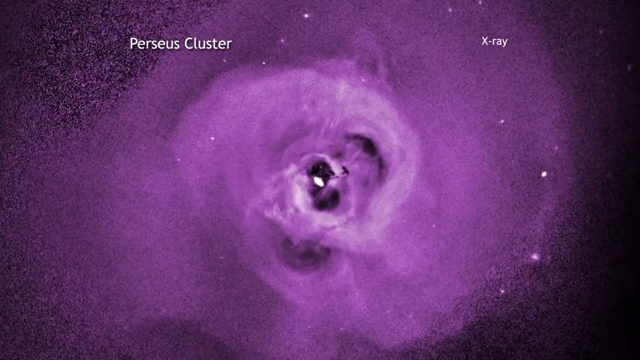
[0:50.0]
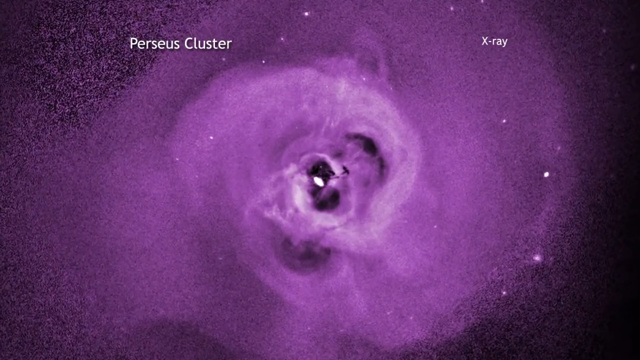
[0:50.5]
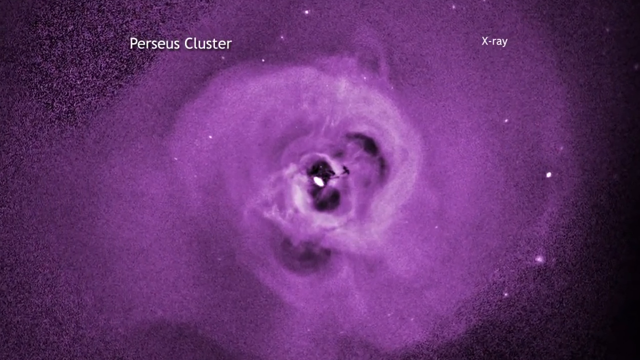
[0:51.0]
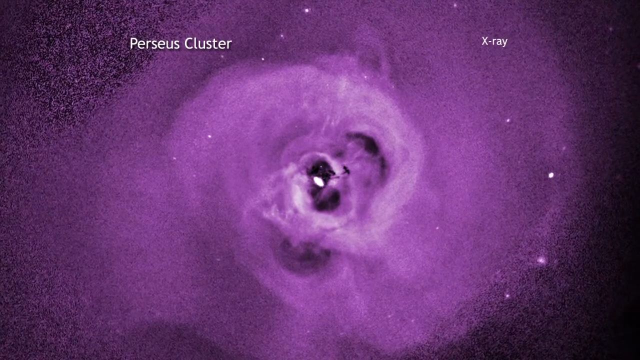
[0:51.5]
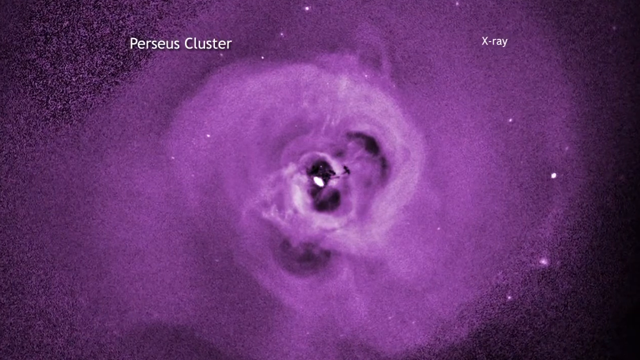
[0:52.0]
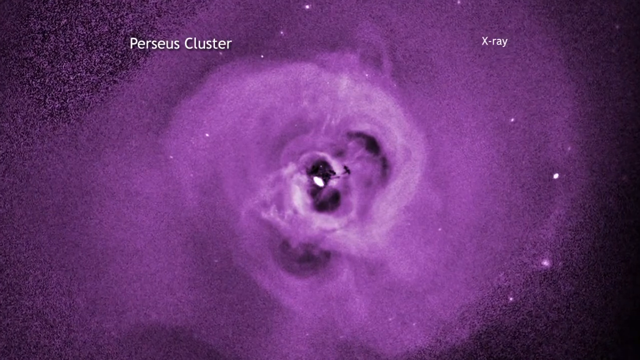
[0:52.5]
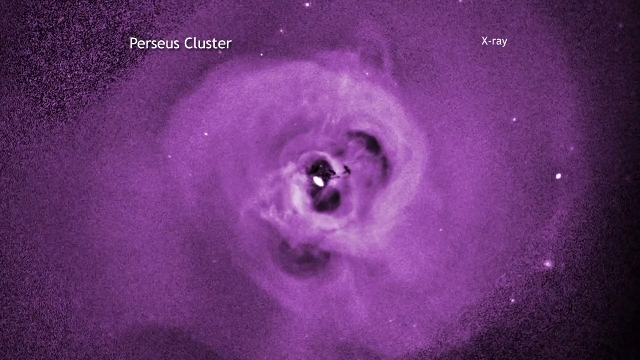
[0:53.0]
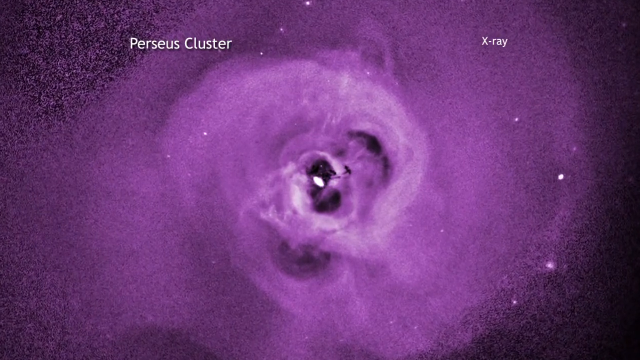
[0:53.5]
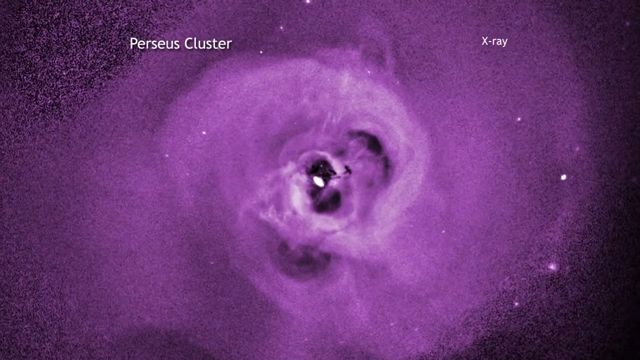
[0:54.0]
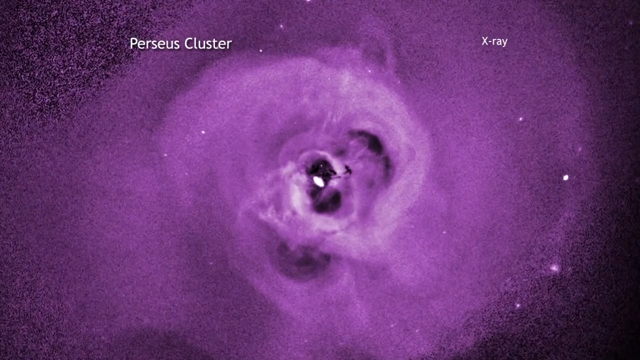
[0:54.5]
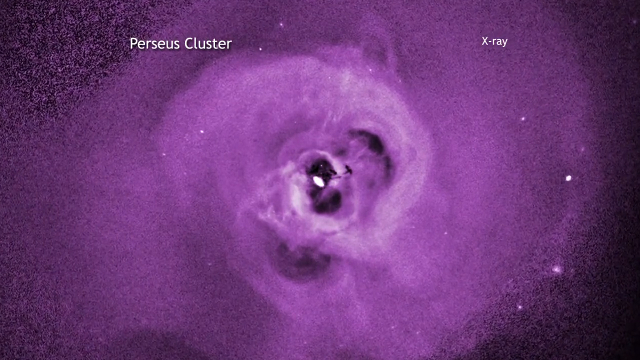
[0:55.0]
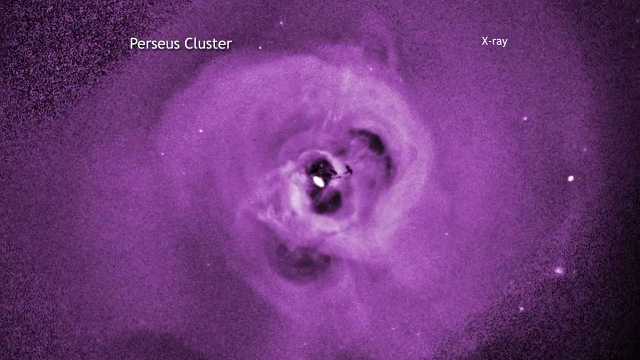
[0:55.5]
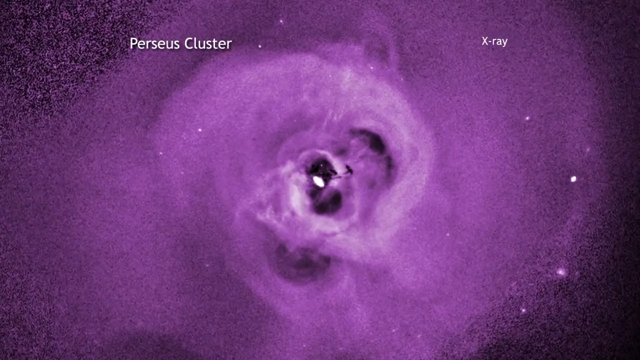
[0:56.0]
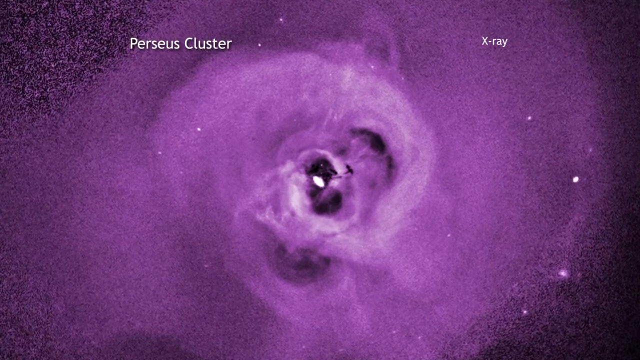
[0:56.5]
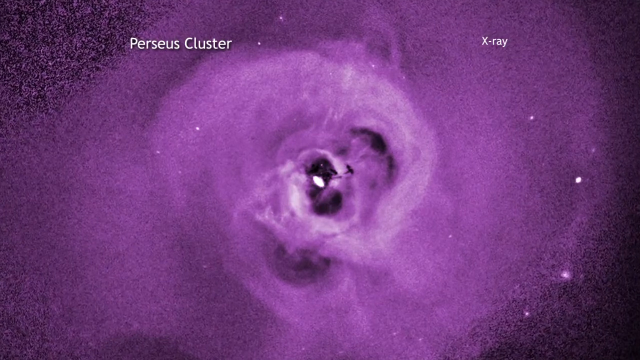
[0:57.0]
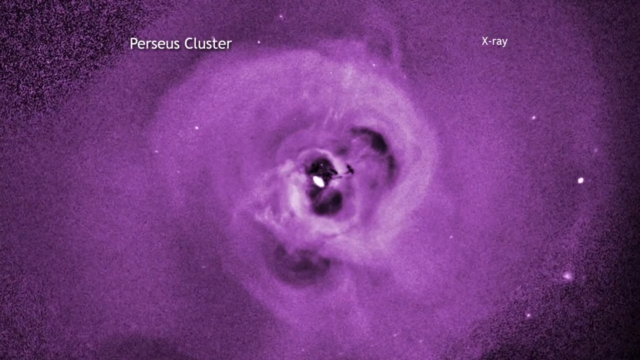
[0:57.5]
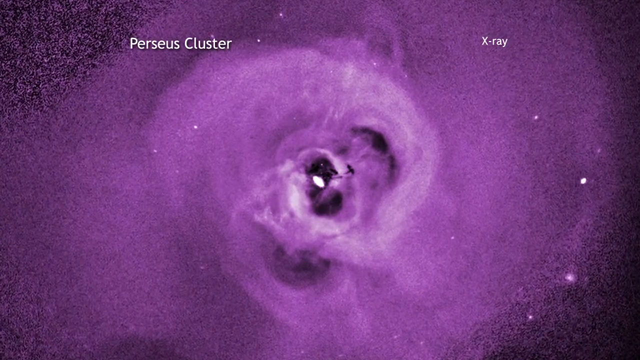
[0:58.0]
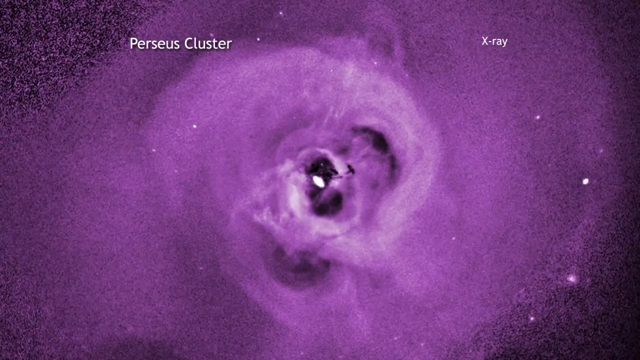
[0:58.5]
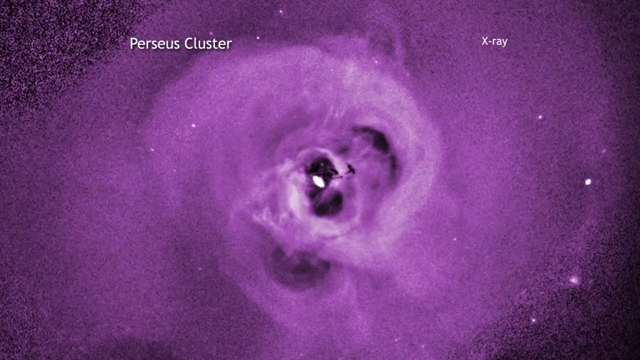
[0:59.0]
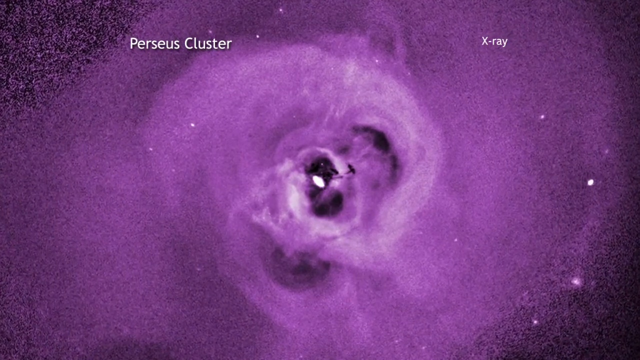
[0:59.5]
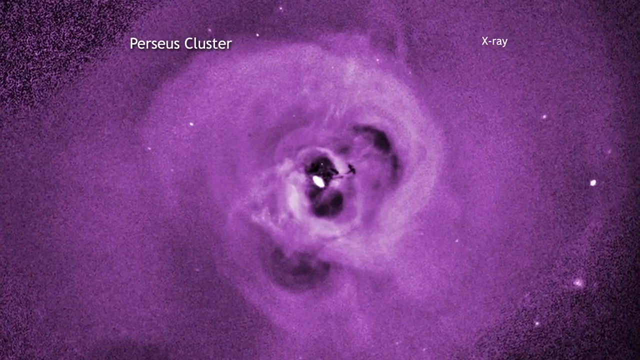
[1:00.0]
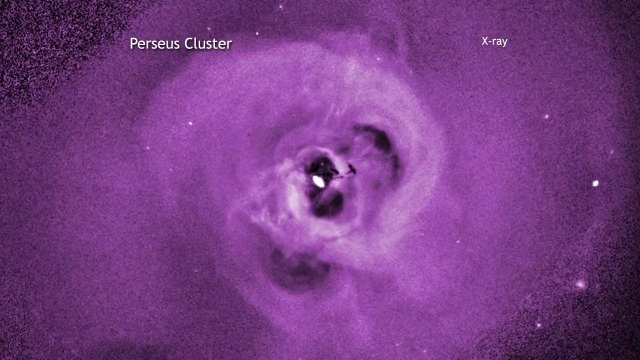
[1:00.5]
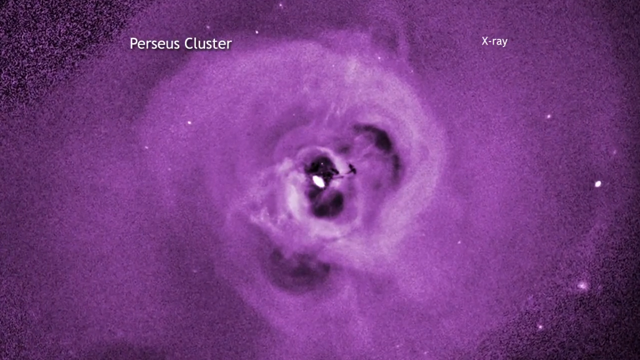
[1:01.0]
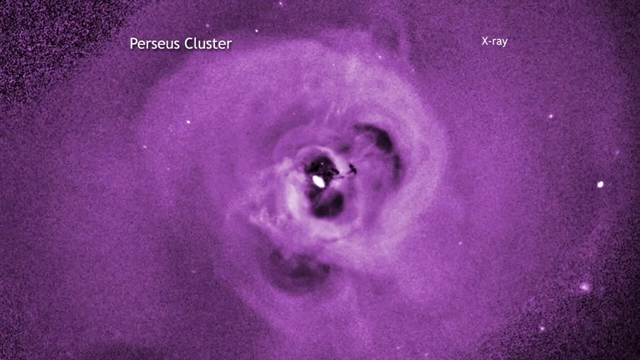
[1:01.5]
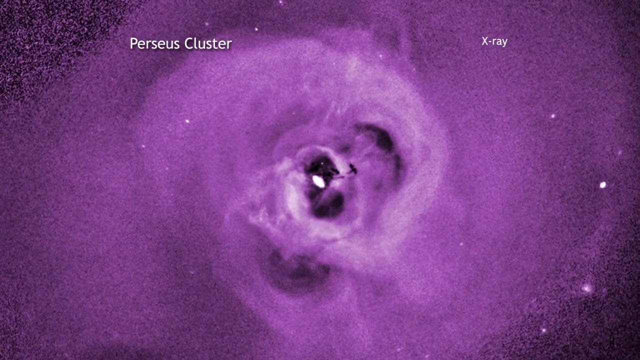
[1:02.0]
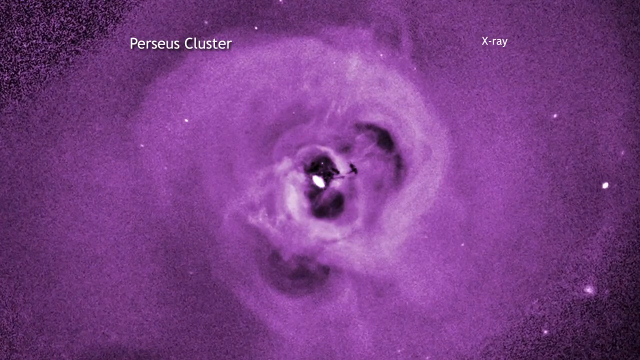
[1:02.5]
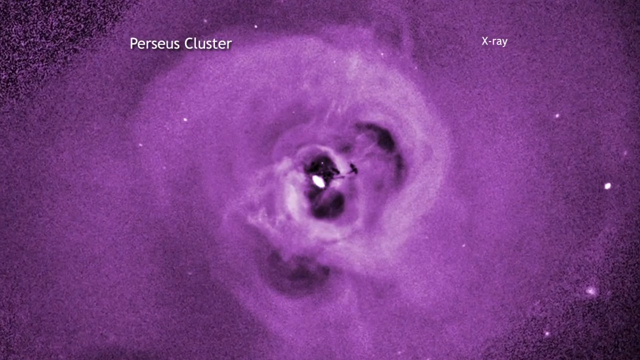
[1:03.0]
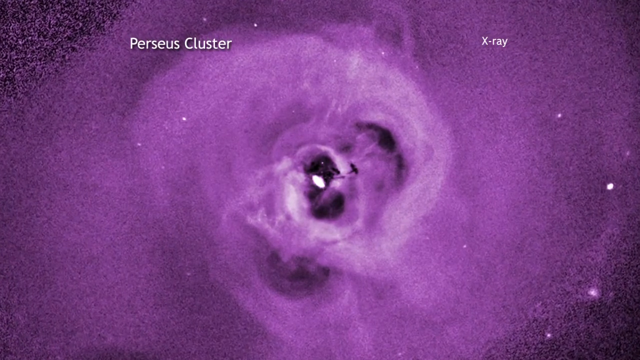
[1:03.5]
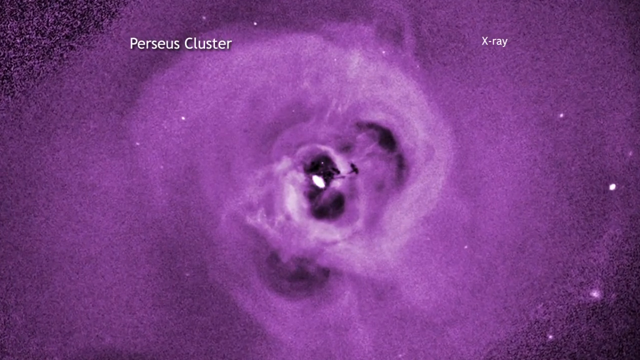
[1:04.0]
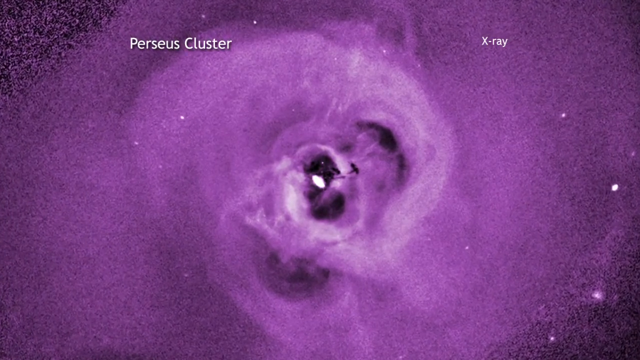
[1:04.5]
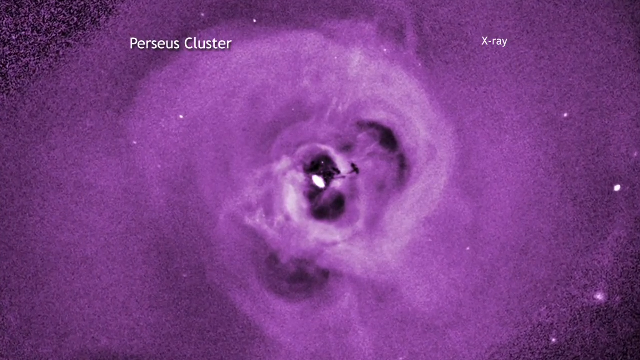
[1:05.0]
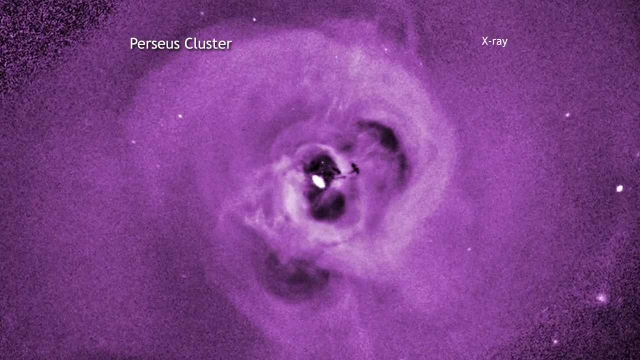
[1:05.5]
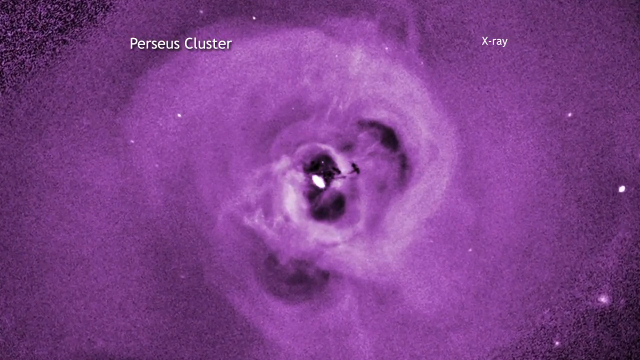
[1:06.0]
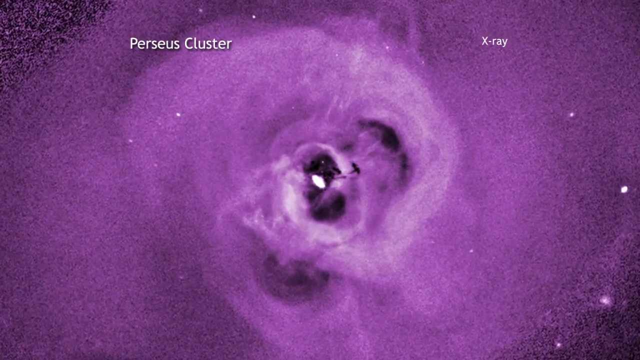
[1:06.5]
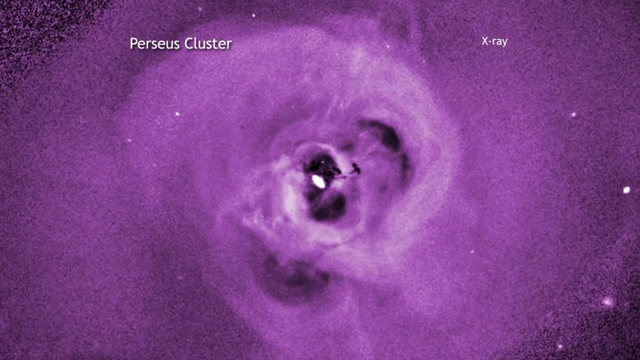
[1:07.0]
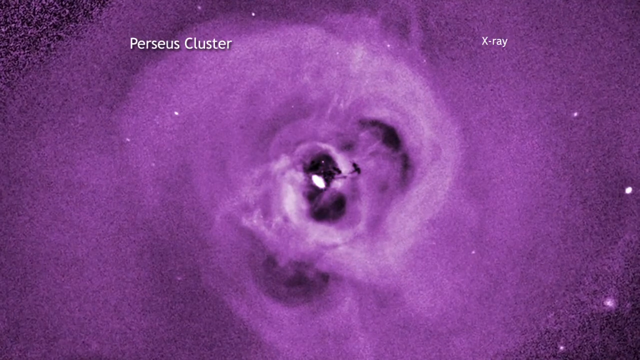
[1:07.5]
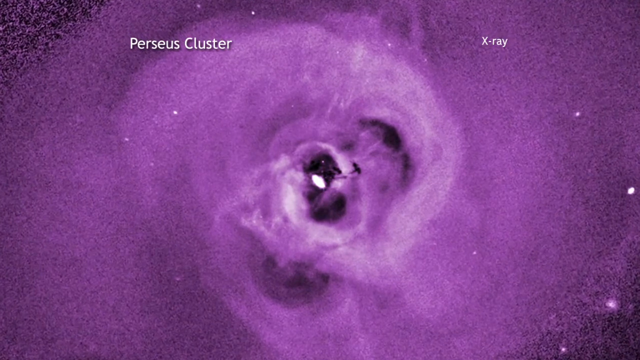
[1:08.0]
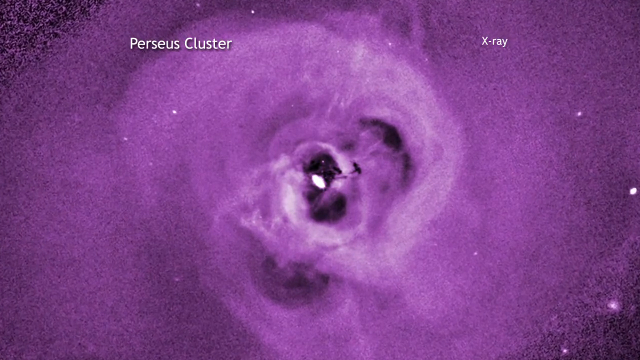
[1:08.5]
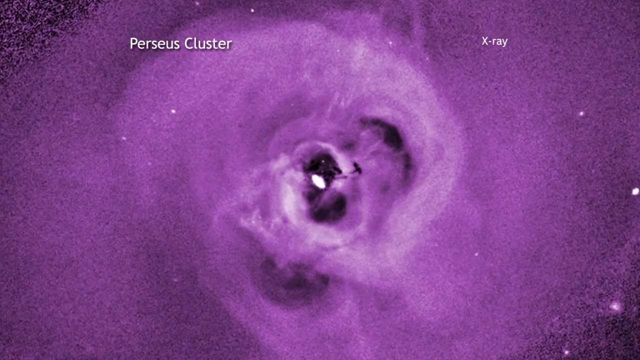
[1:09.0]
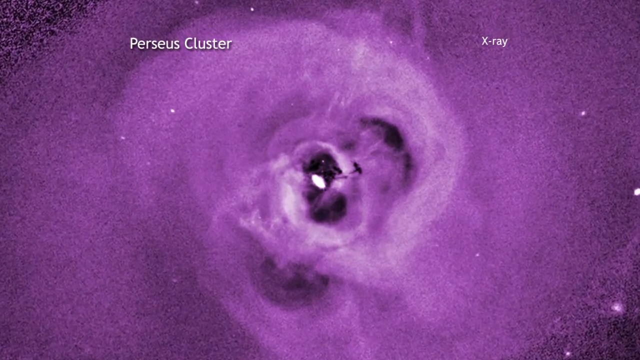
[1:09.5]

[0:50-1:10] The picture of the Perseus cluster is zoomed into even further, showing more detail in the swirling parts at the center. In the center there seem to be a few black spaces that appear to show space behind it. Some of the white dots are smaller than others, and some seem more oval. The white text "Perseus Cluster" and "X-ray" remains at the top of the screen, with "Perseus Cluster" larger than the "X-ray" text on the right. A little of the black border is visible on the right side of the cluster, while on the left side the cluster fades out into smaller dots or stars, with the black space background visible behind them as they thin out. The image does not change and does not seem to zoom in any further.